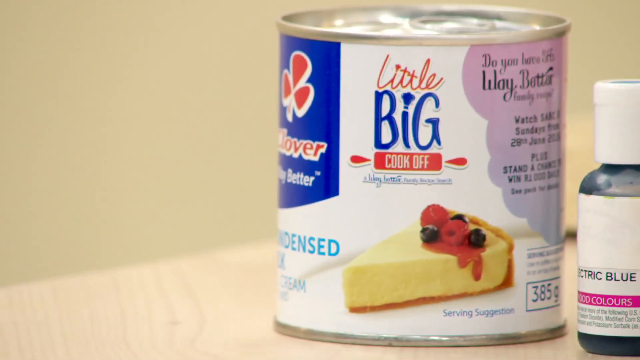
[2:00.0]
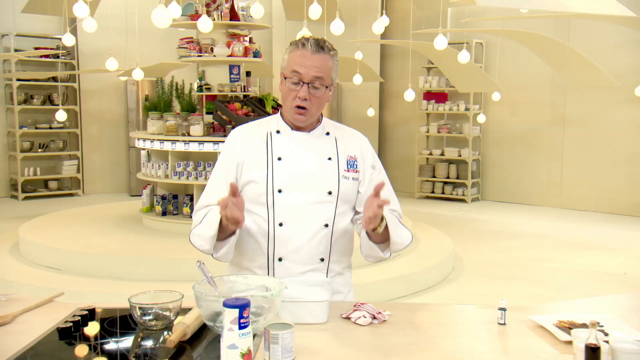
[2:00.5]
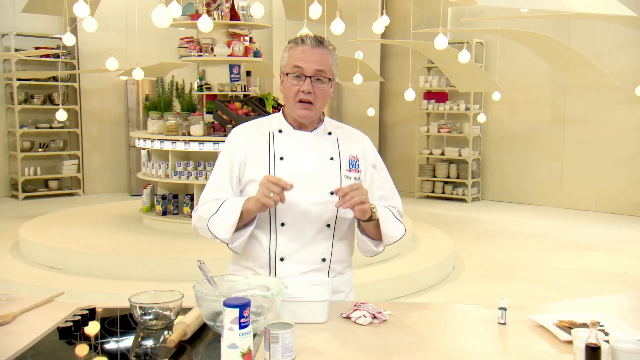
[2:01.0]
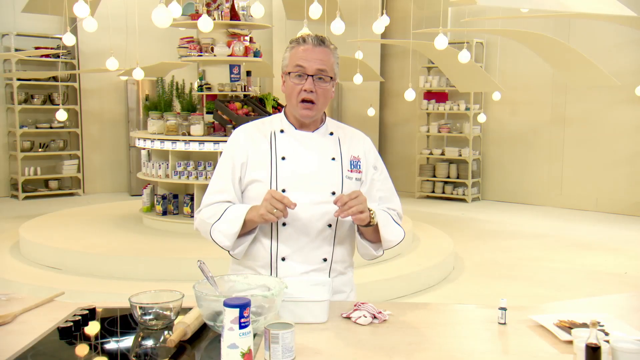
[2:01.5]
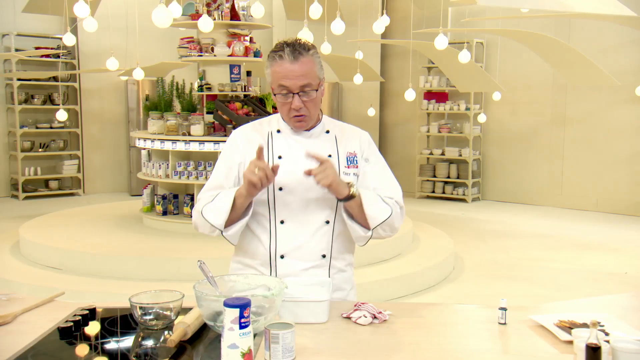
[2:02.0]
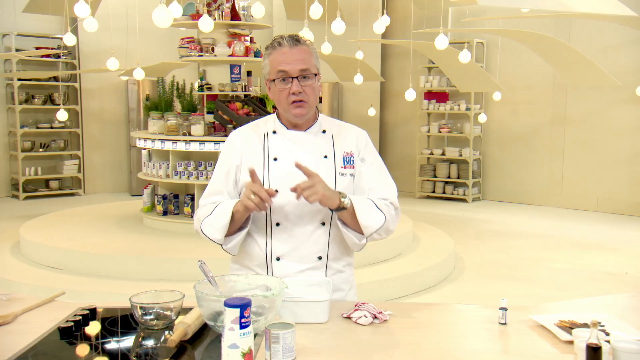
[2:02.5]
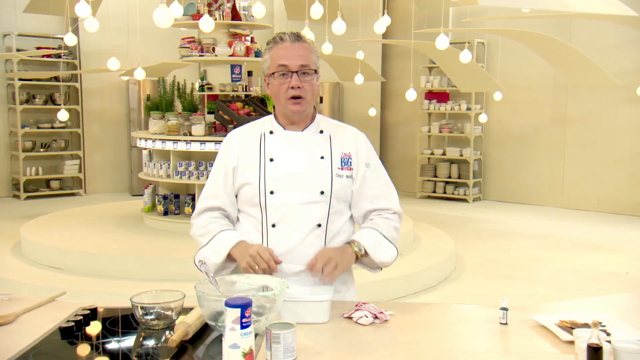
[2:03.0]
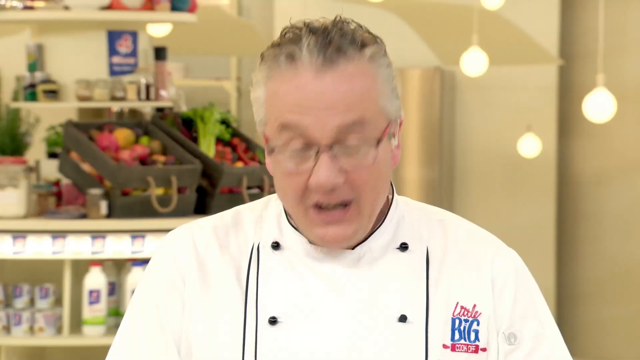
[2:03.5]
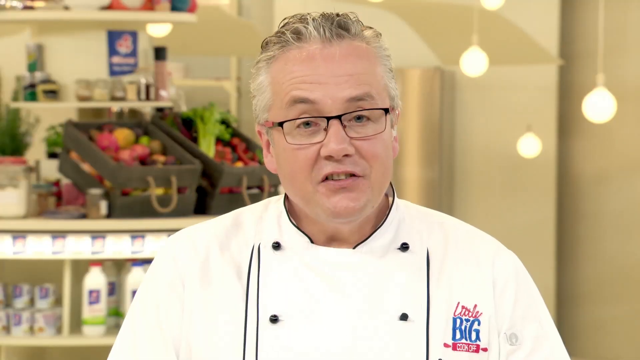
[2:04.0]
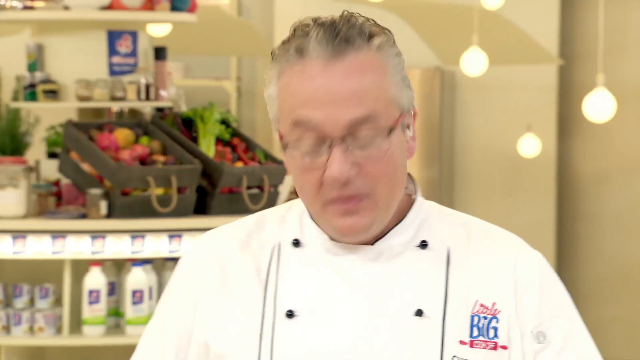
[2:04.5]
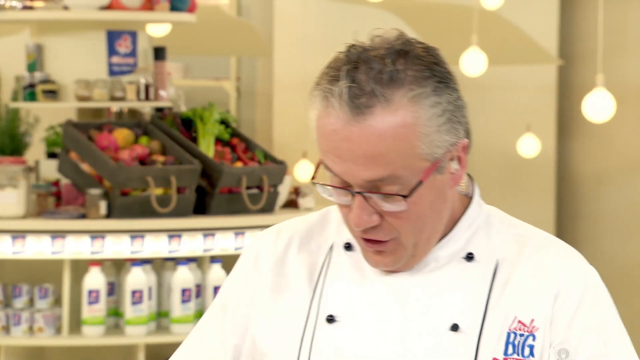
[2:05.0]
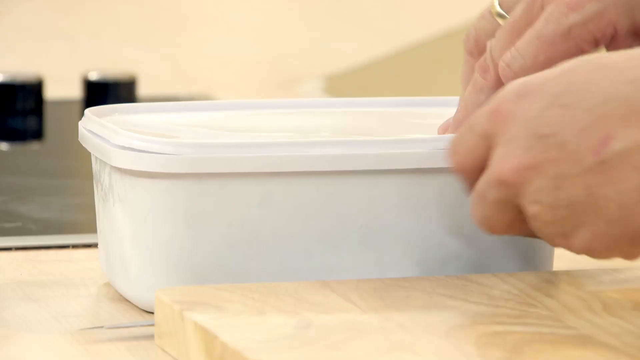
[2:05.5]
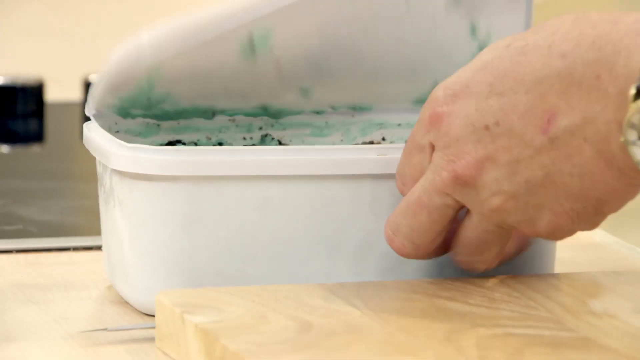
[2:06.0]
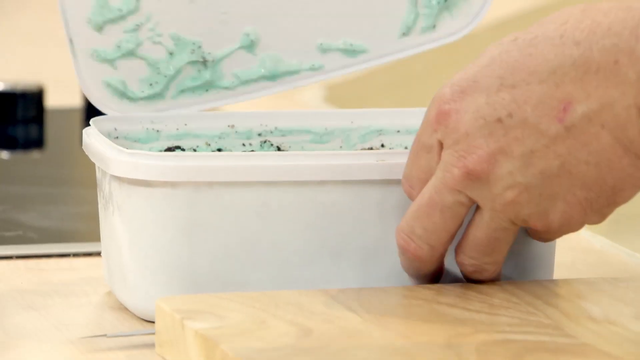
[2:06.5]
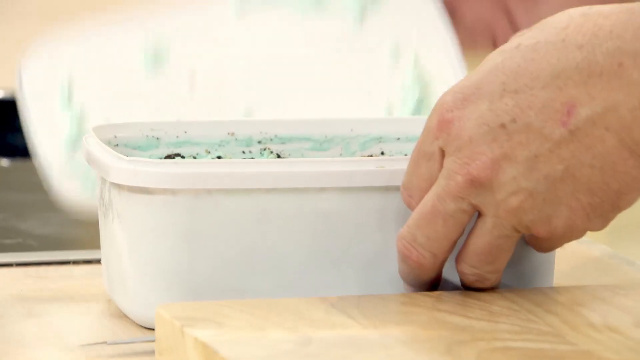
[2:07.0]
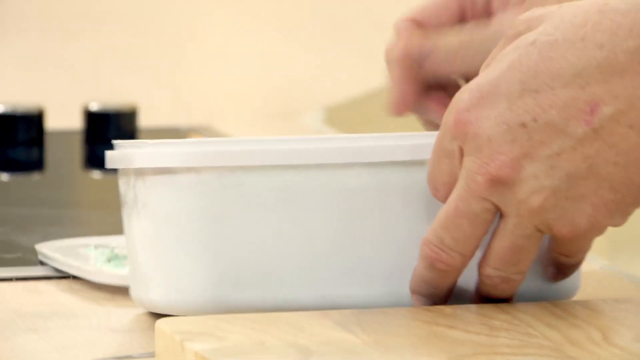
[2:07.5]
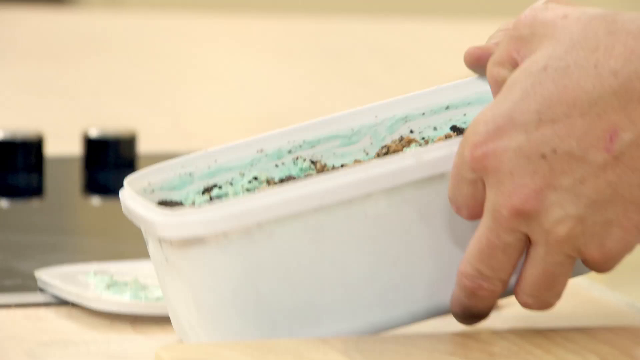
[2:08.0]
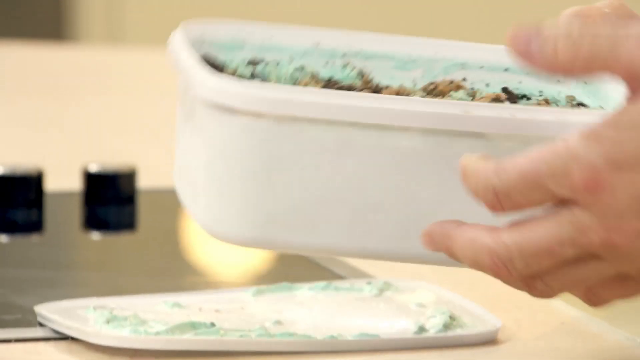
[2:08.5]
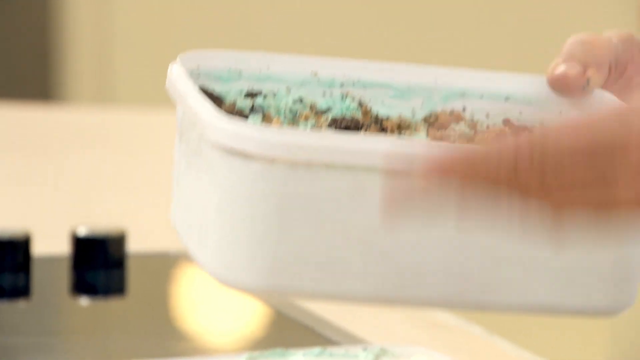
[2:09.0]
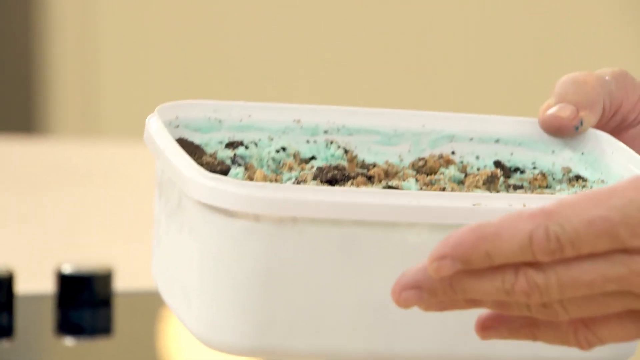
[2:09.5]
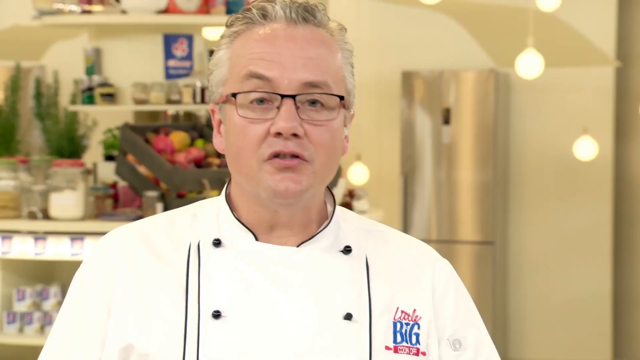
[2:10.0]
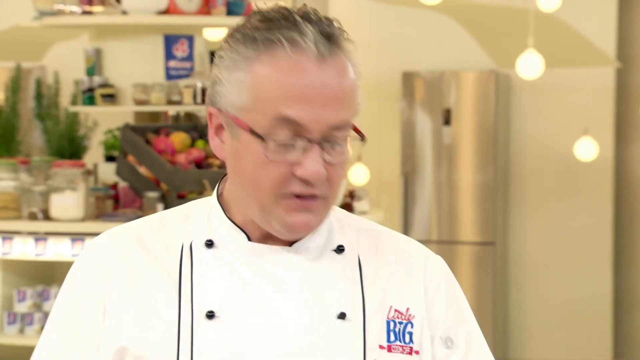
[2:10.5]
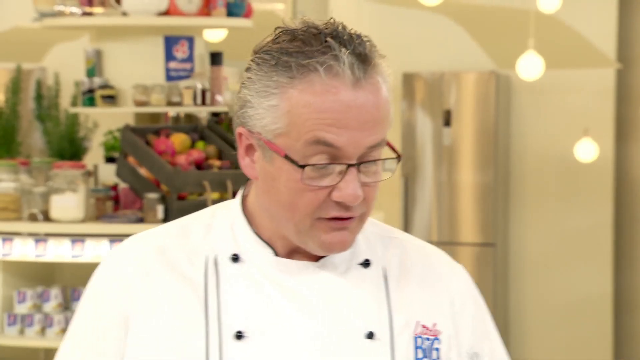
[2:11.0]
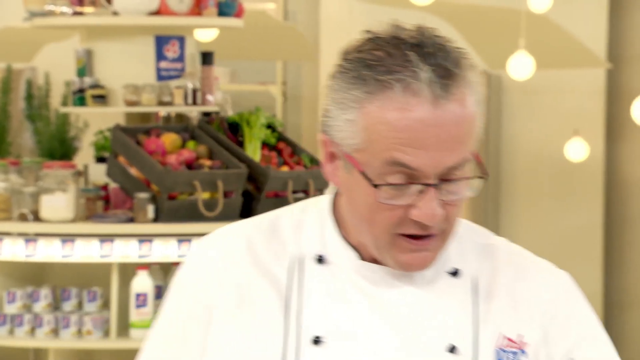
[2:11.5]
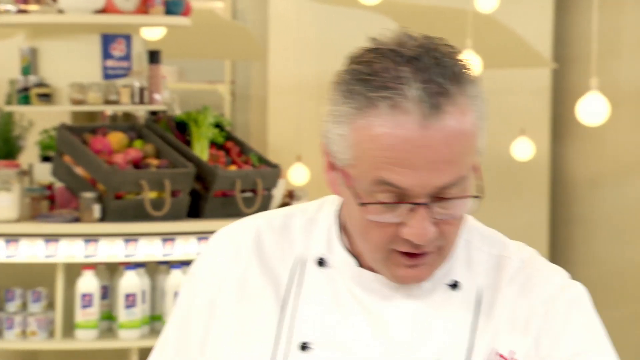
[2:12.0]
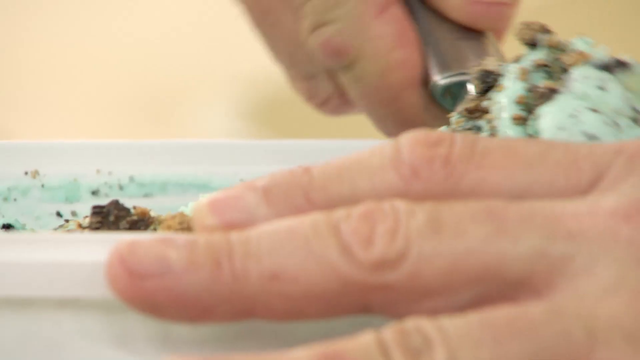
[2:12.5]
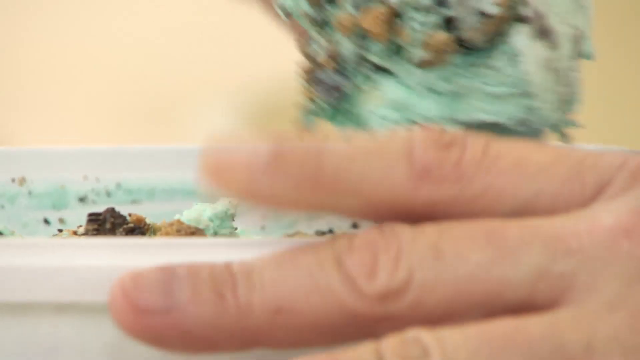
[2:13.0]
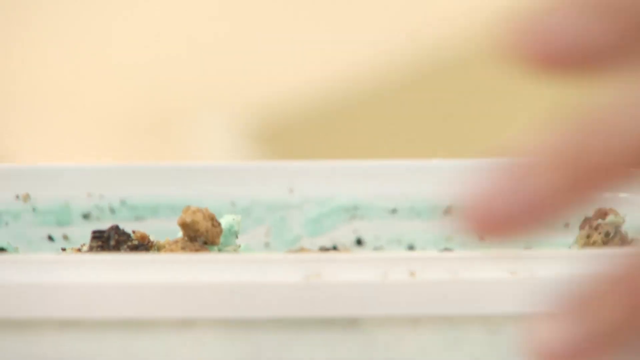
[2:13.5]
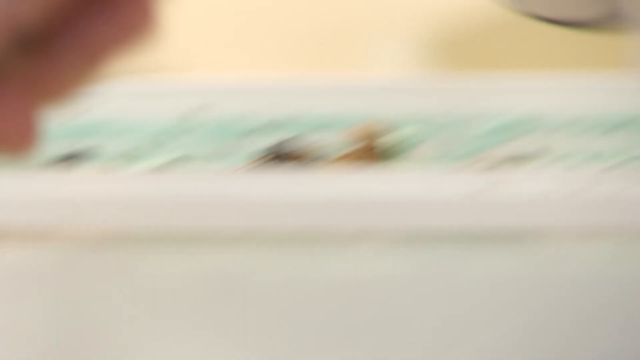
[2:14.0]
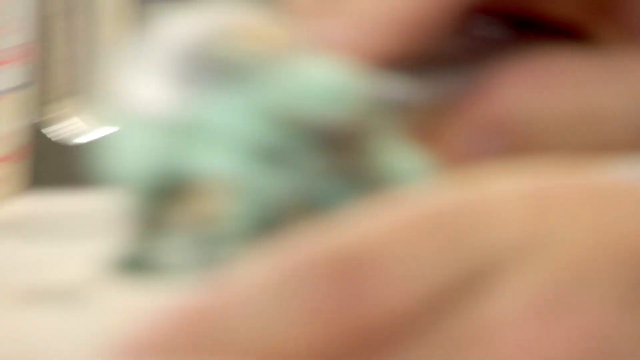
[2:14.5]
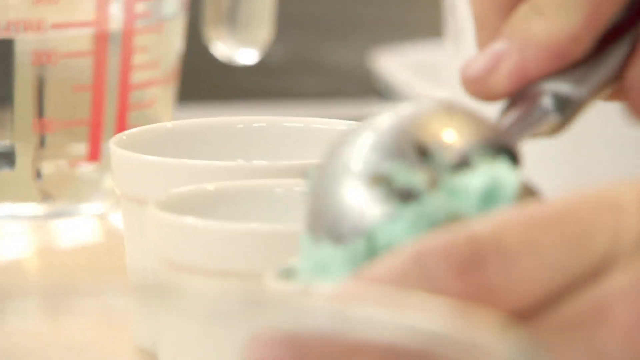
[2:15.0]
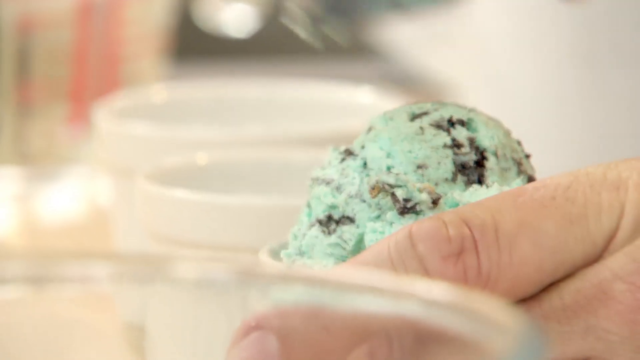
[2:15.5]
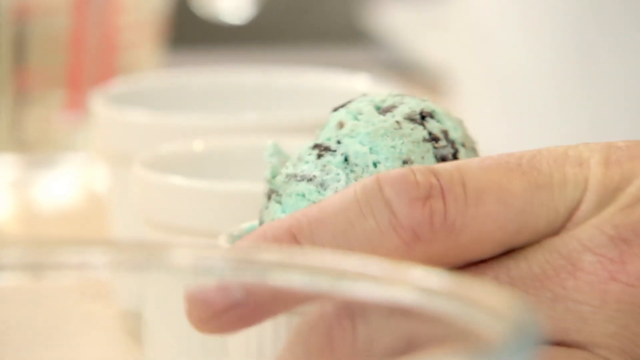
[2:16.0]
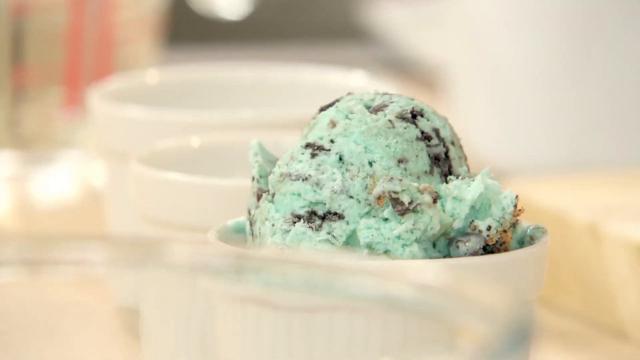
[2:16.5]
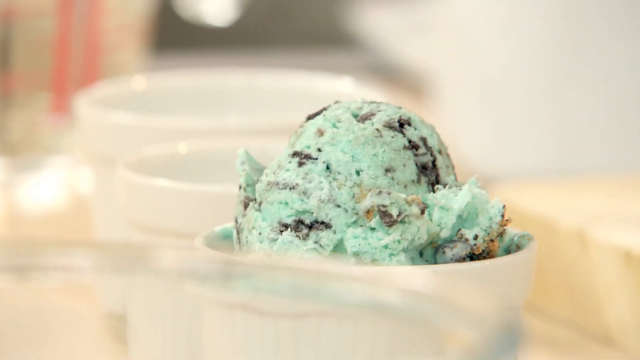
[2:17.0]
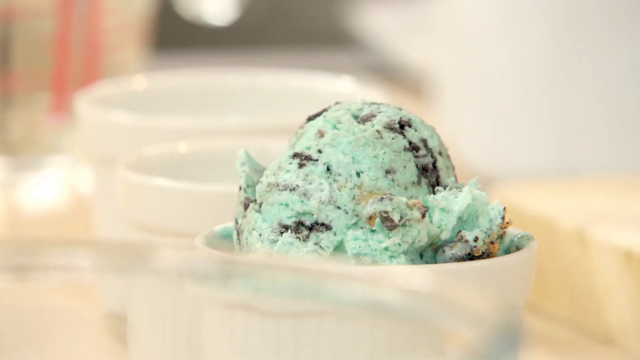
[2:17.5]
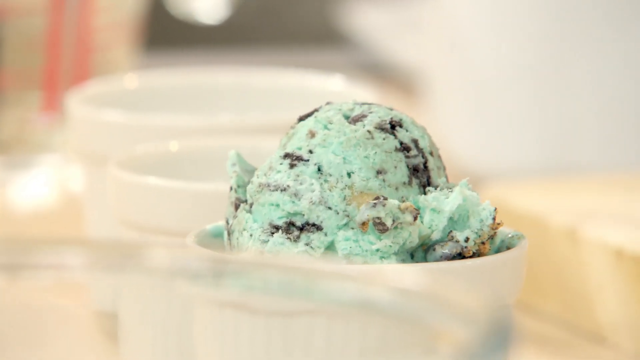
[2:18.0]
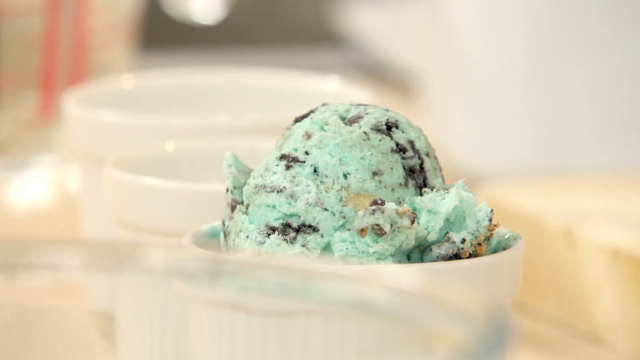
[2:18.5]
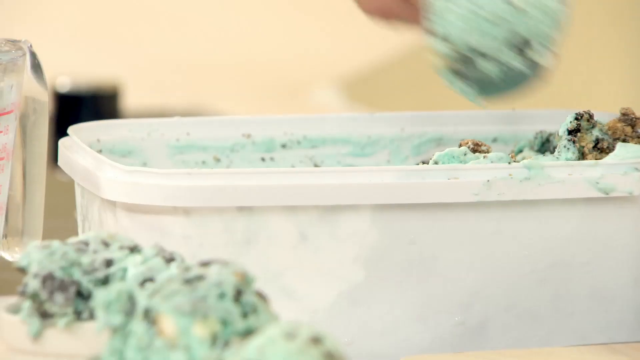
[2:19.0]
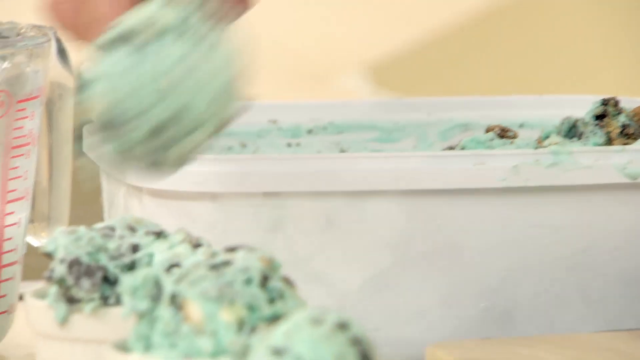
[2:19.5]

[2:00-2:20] The chef is seen from the waist down, looking at the camera and speaking while moving his hands a lot; he sort of points from left to right at something unclear. He keeps looking at the camera and talking, then looks down at a white container with a white lid. He pulls off the lid and places it on the counter, revealing green ice cream with small cookie bits on top. Still speaking and looking down, he scoops the ice cream into small white bowls one by one, seemingly planning two scoops per bowl.